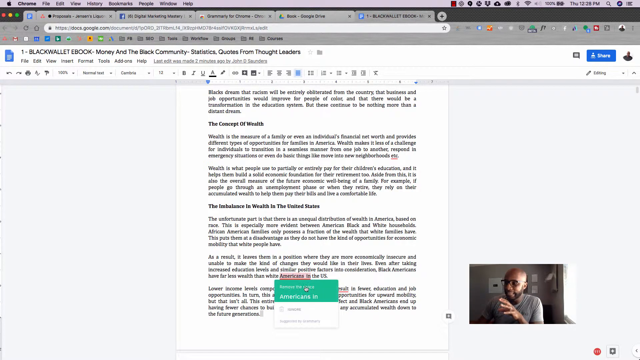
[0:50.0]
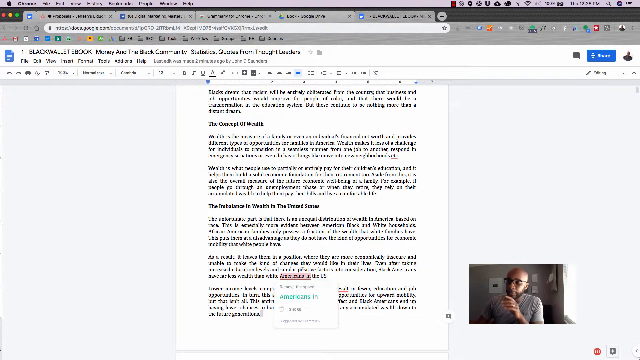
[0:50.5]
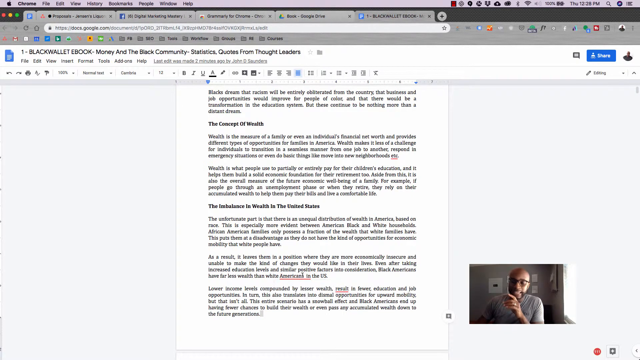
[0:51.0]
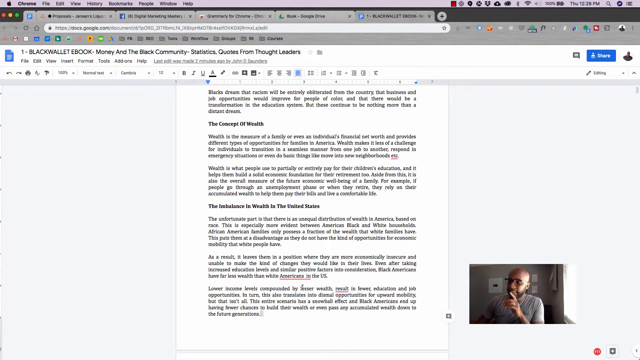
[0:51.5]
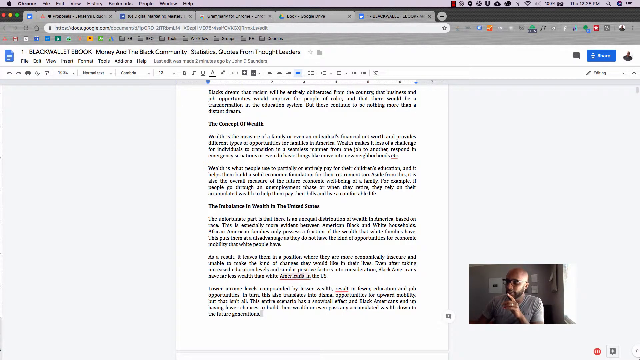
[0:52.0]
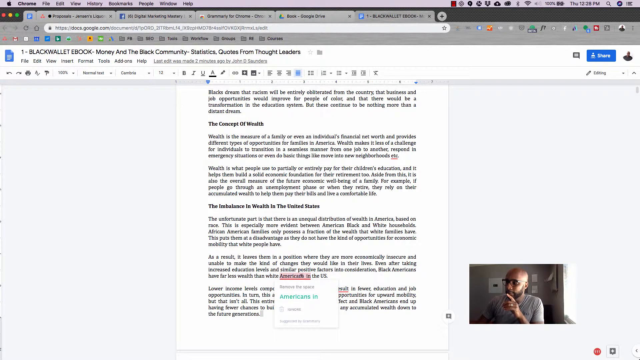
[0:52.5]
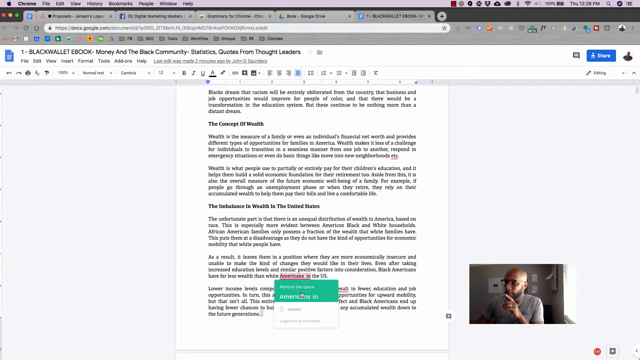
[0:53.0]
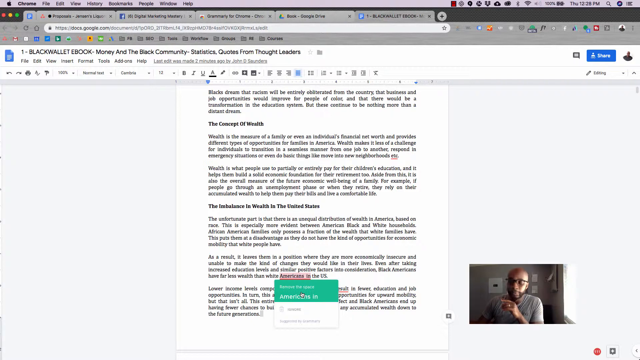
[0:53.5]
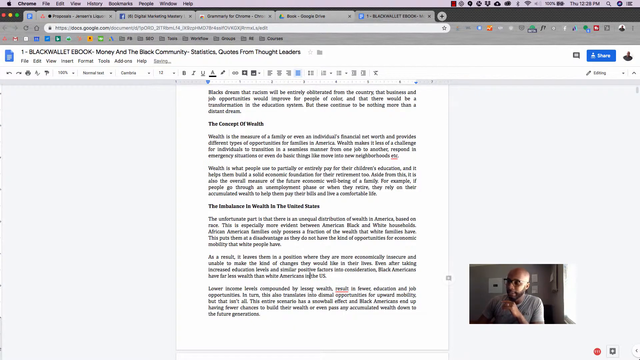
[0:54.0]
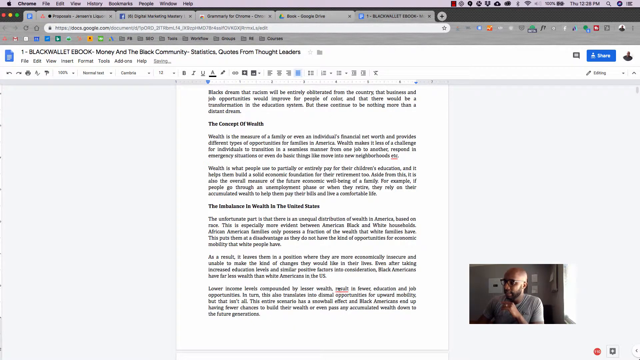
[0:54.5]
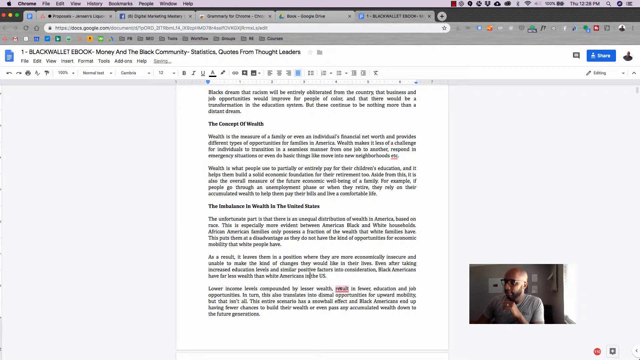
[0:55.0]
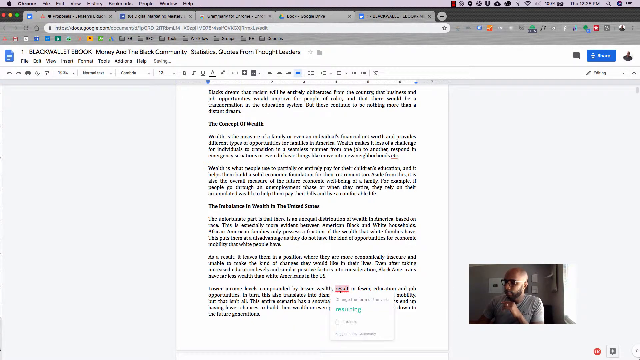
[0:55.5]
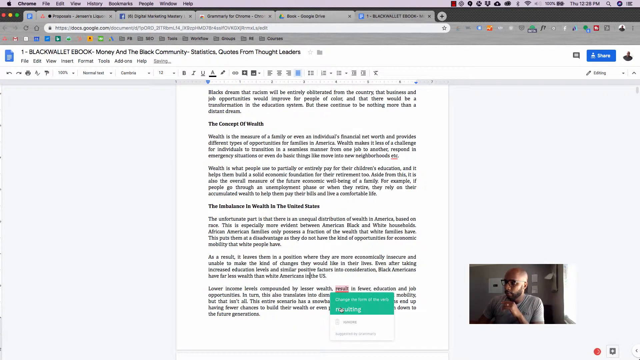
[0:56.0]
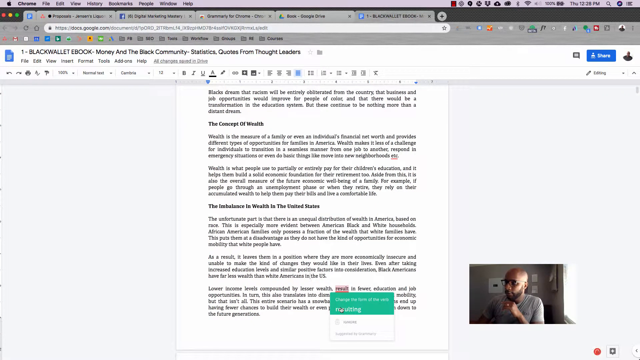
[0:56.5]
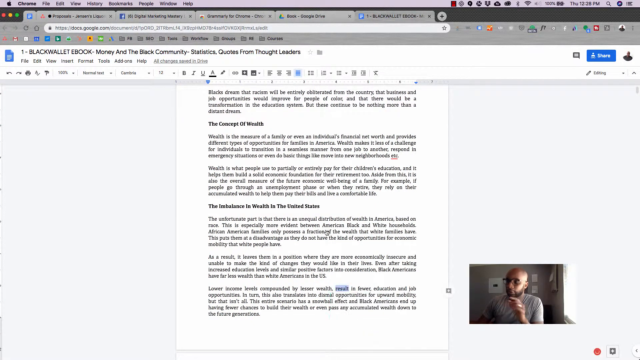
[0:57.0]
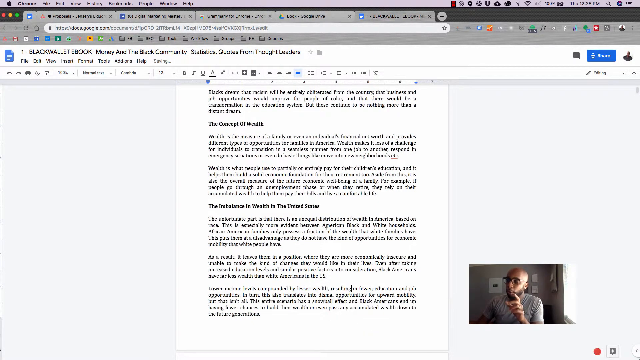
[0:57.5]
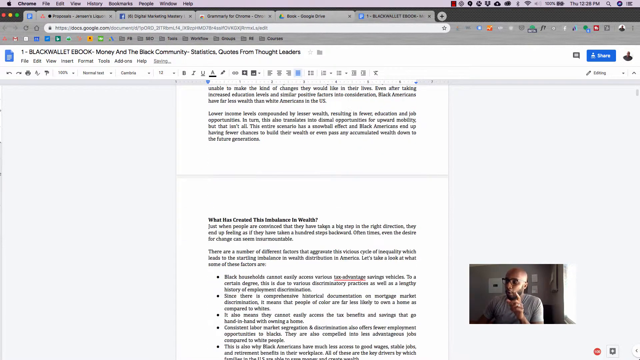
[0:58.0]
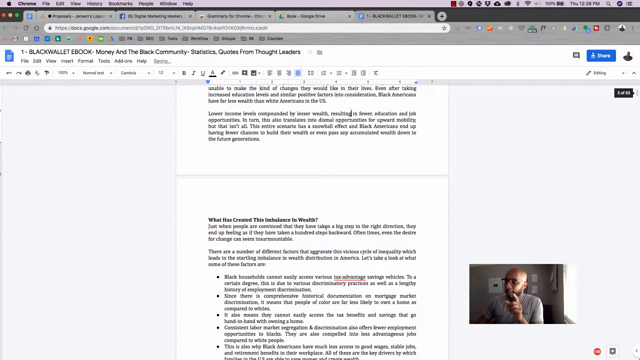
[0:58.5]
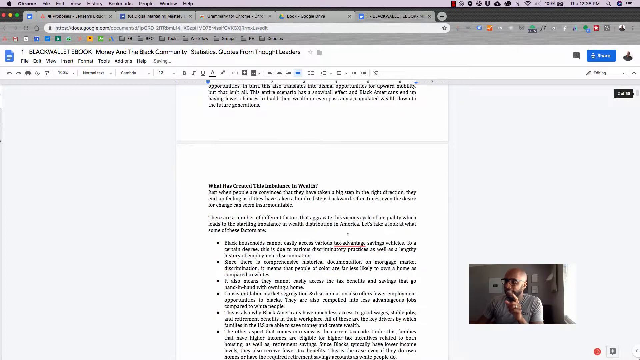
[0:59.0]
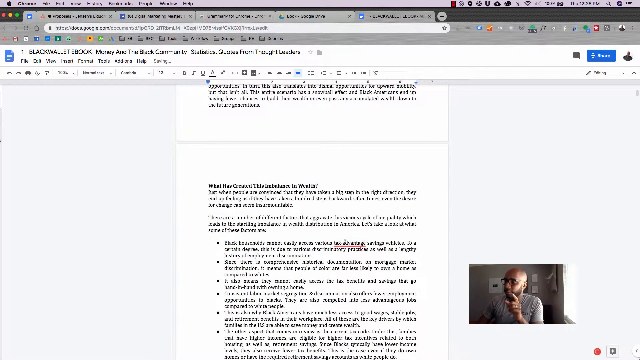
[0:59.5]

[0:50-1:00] The man looks at his document while the extension highlights some of the words he used. When he clicks on one, the extension shows how that word can be better written or replaced with another word so the content is easier to understand. He looks through the text for details the extension can change, and he seems kind of astonished at how well it works.